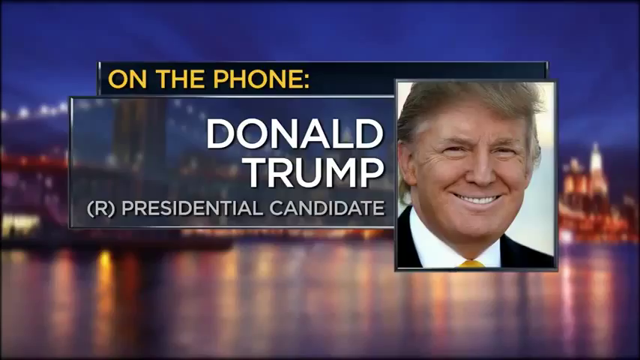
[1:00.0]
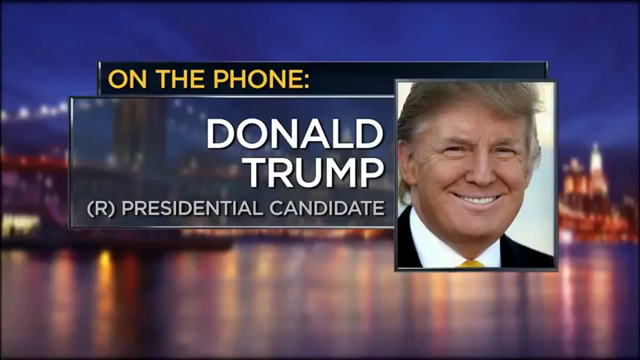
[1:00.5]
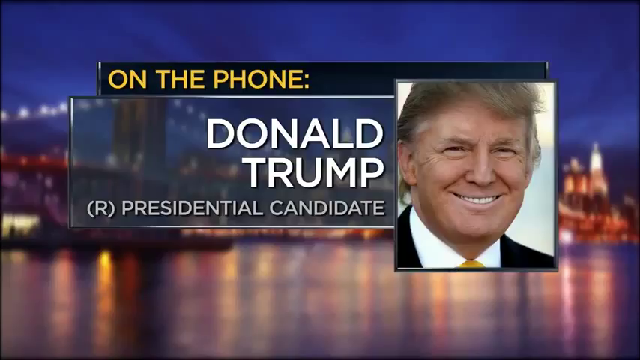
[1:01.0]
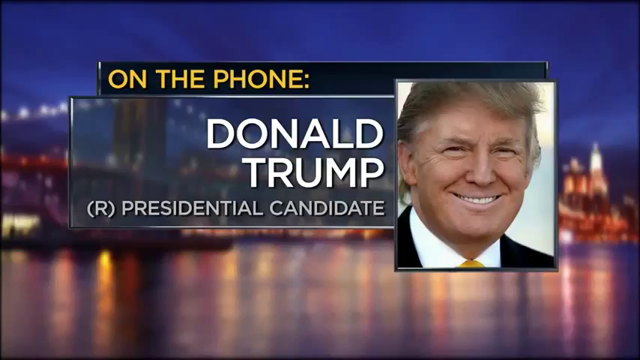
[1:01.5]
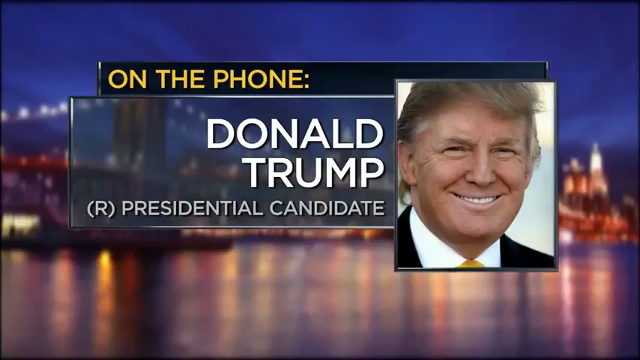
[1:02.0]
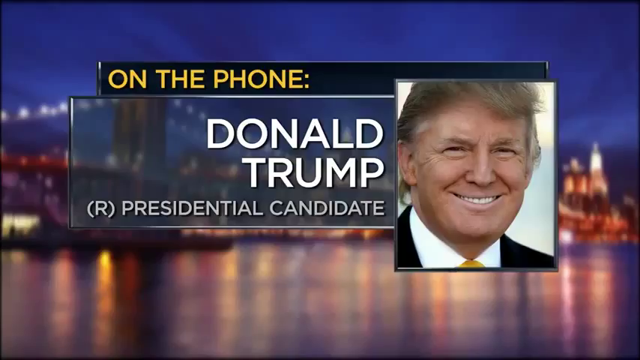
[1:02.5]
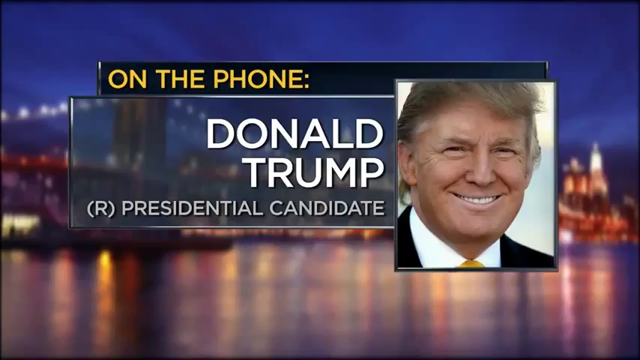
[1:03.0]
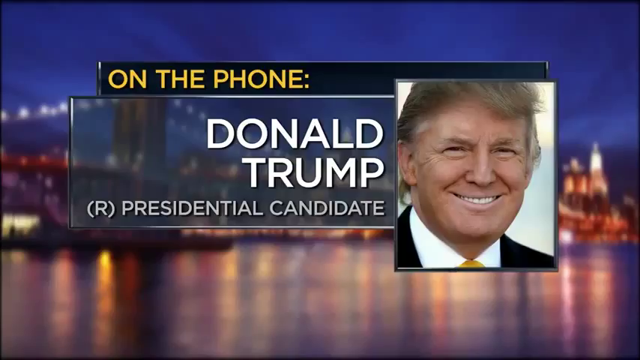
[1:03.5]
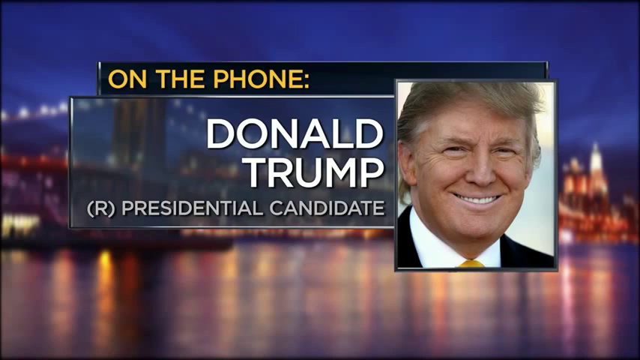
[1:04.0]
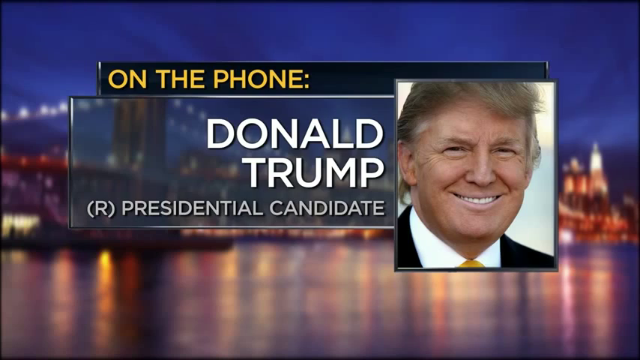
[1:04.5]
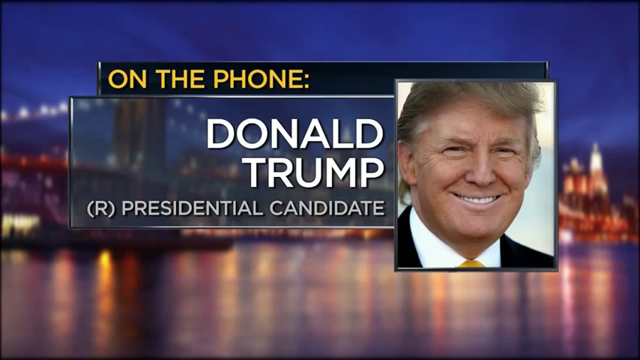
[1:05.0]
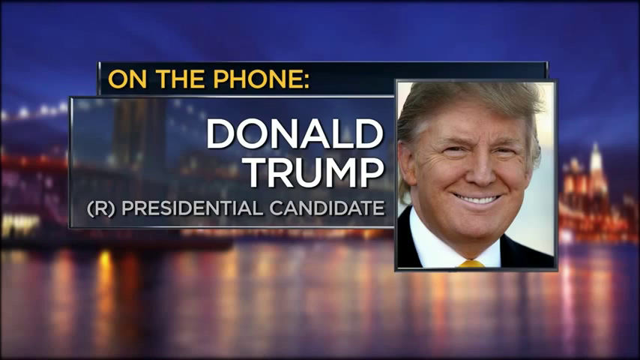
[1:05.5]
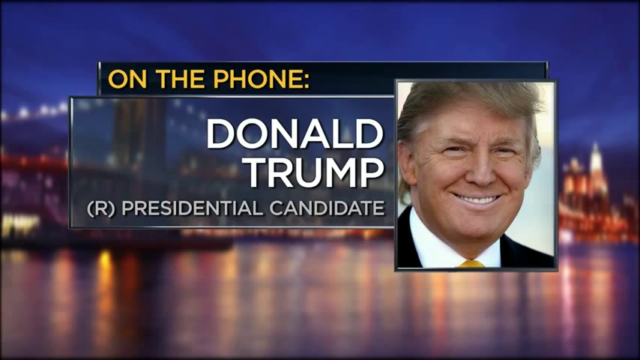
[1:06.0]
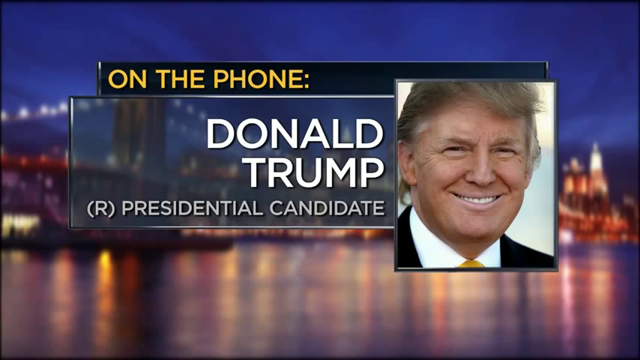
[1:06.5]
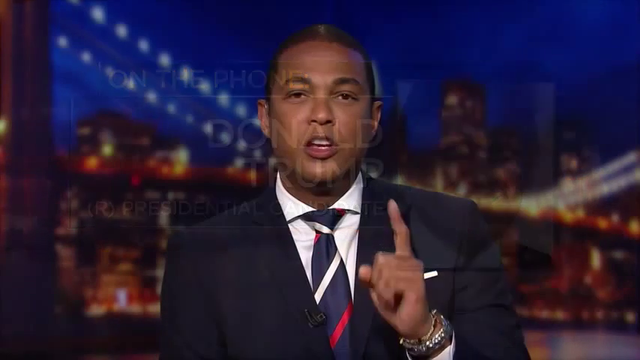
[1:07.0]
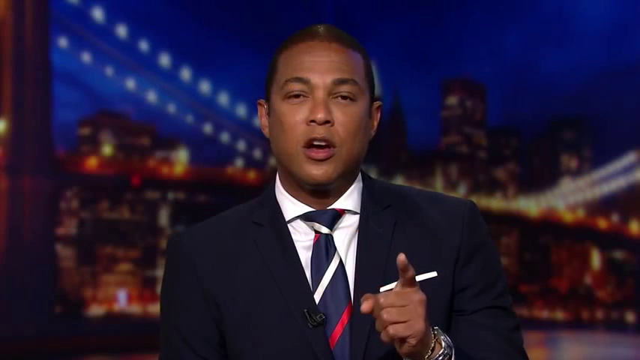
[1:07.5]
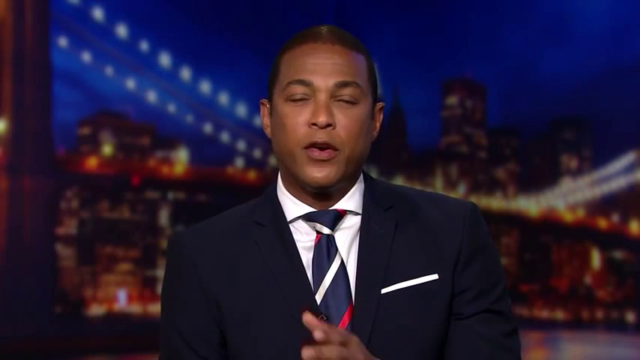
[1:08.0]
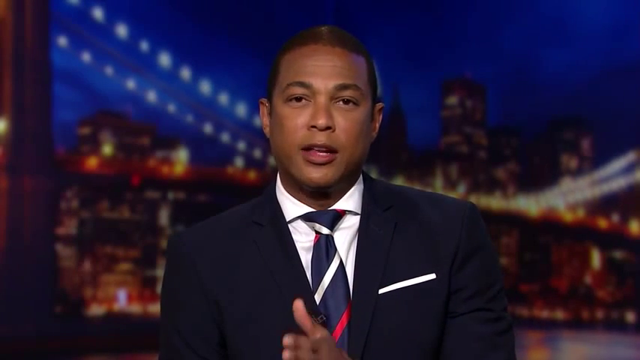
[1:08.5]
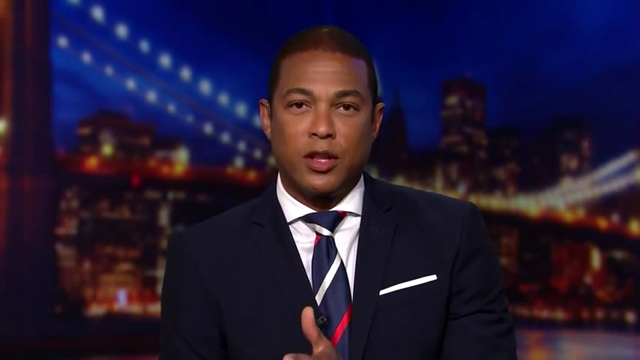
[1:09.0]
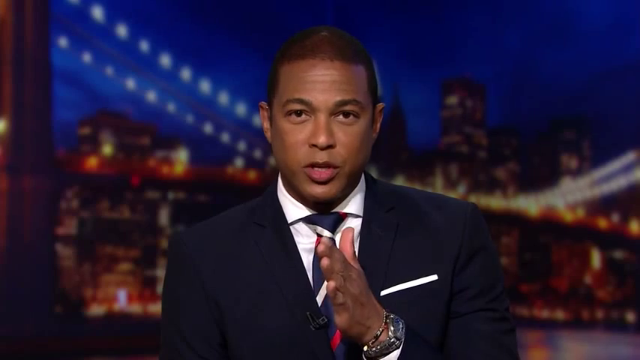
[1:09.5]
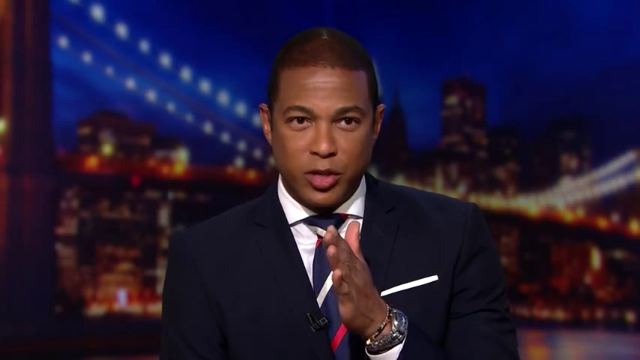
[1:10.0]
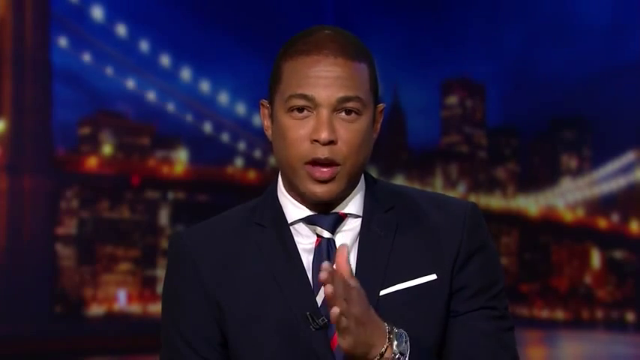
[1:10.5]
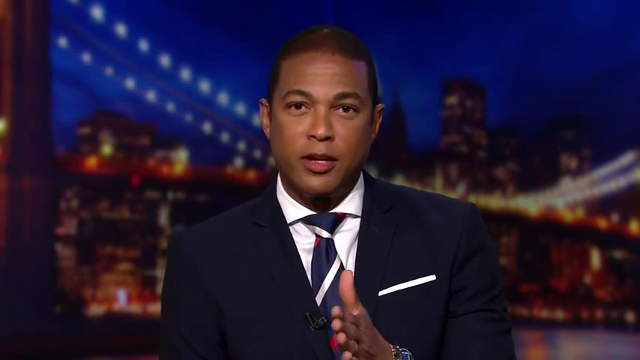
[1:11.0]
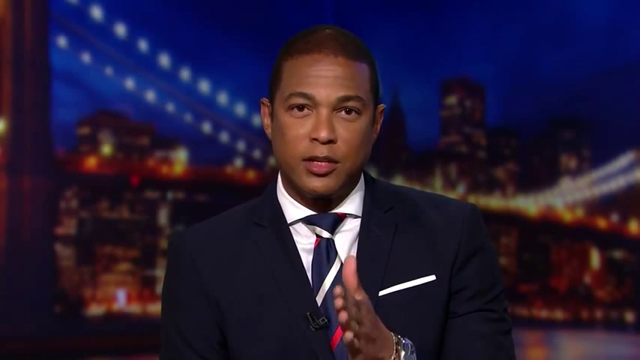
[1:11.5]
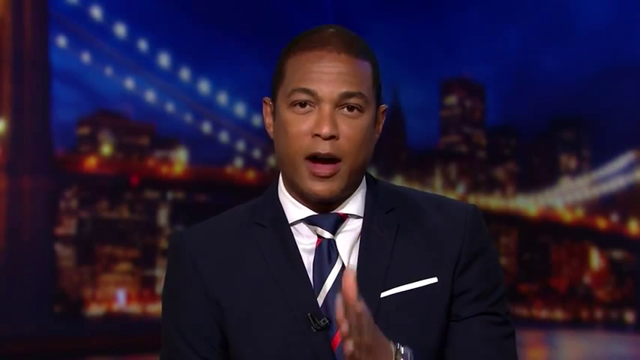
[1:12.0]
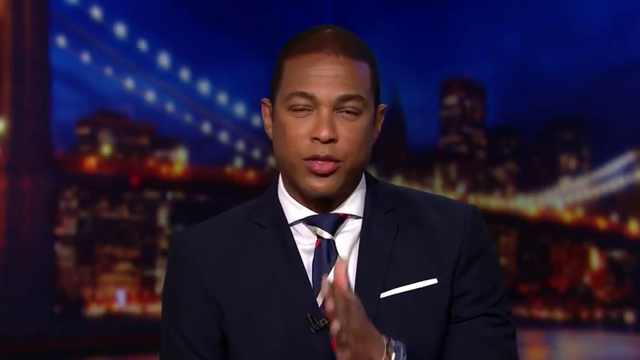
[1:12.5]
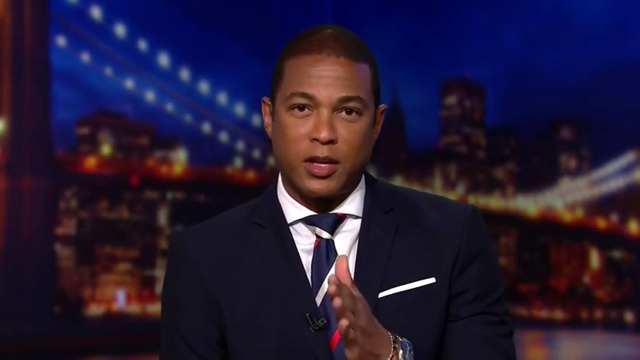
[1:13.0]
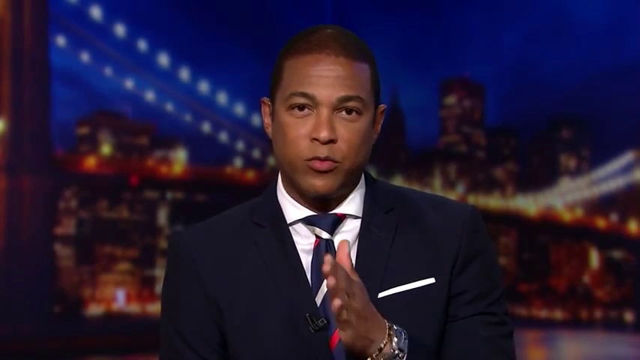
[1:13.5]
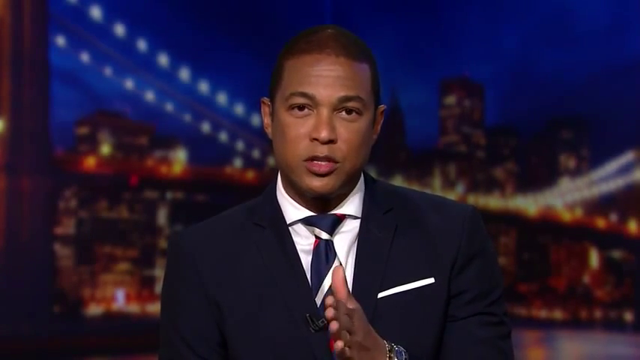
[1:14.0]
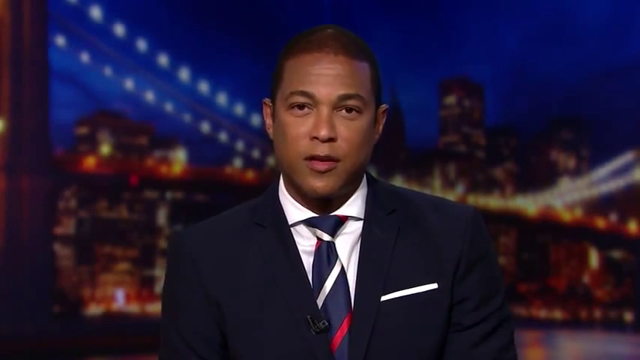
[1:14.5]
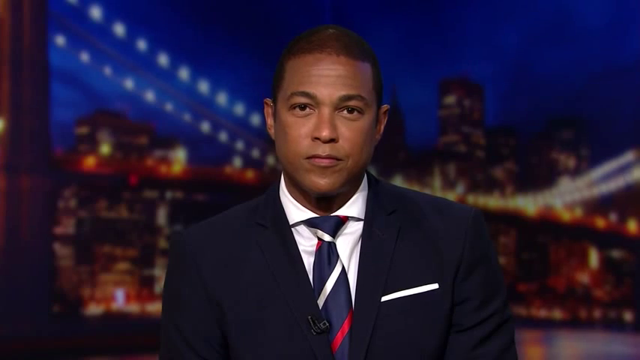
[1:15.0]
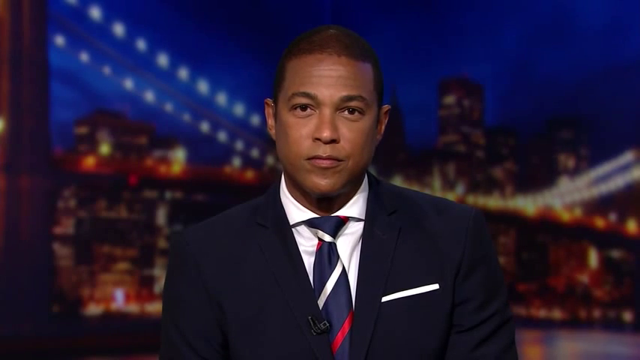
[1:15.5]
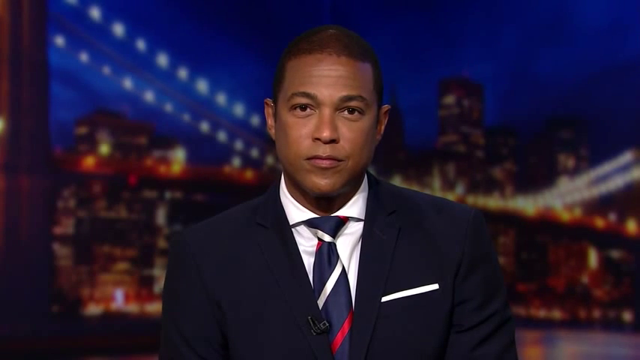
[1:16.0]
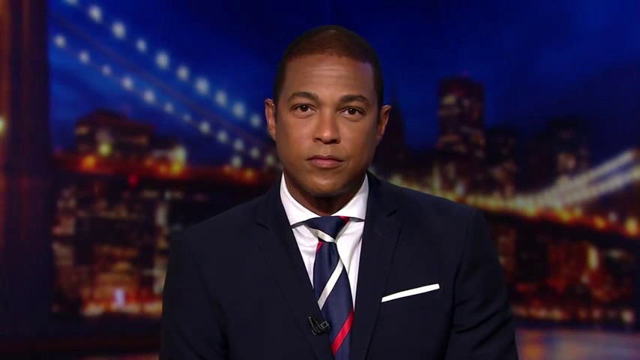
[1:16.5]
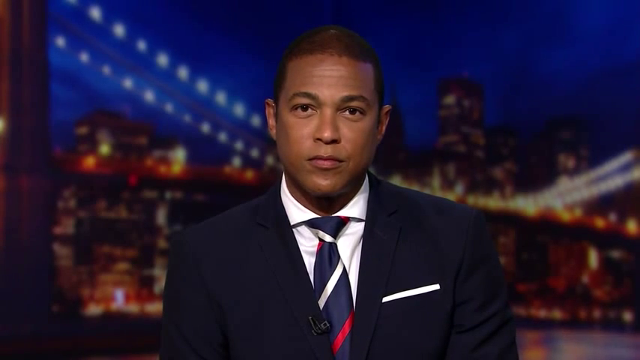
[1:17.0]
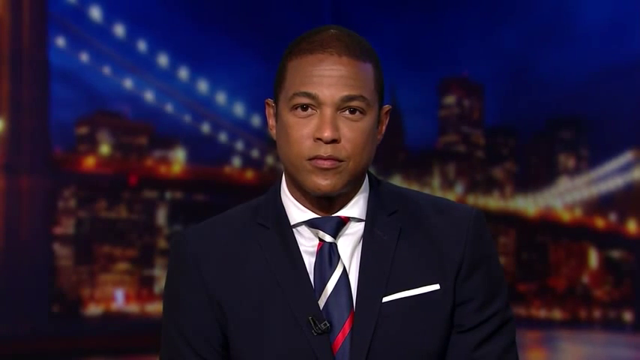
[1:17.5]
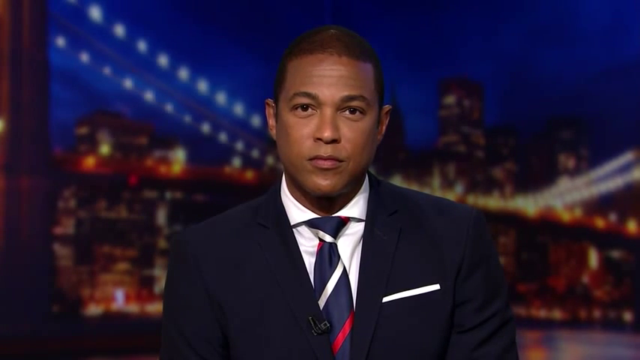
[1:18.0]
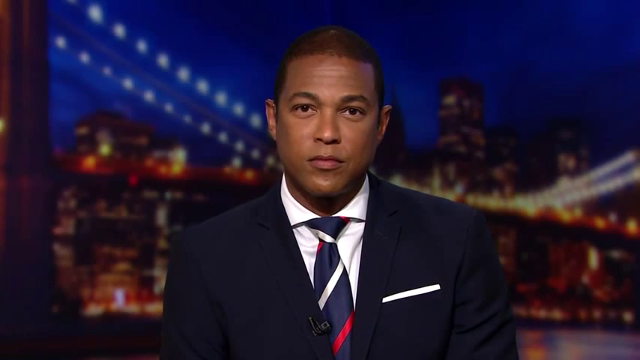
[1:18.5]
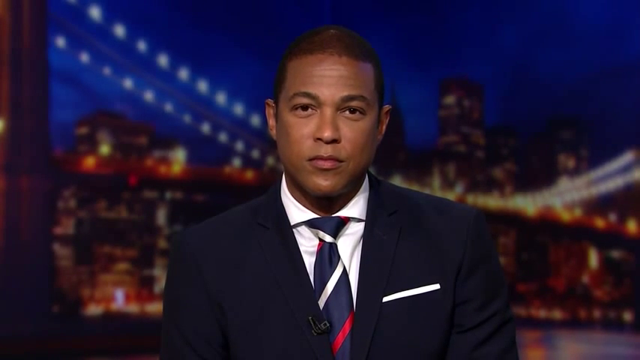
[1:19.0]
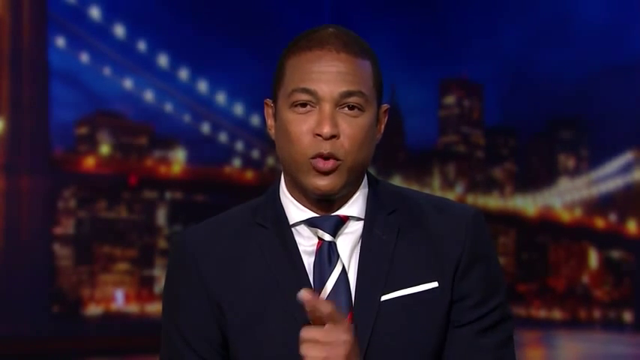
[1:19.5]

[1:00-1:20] The "on the phone" screen continues for a moment before the video returns to the news anchor, who kind of points at the screen with his whole hand, held sort of flat and perpendicular to the screen. A silver watch is visible on his wrist. He pauses at certain points. There is no indication of the news network and no banner at the bottom of the screen; there is just the anchor. He has very short brown hair cut close to his head.